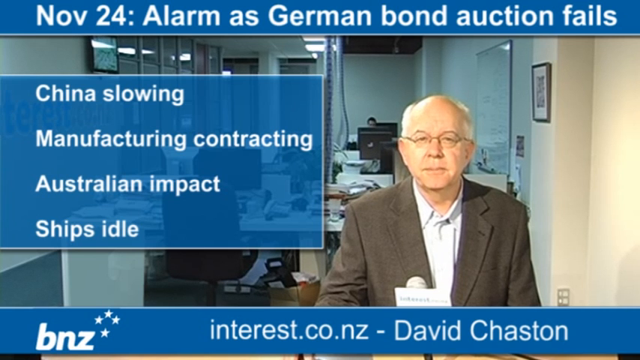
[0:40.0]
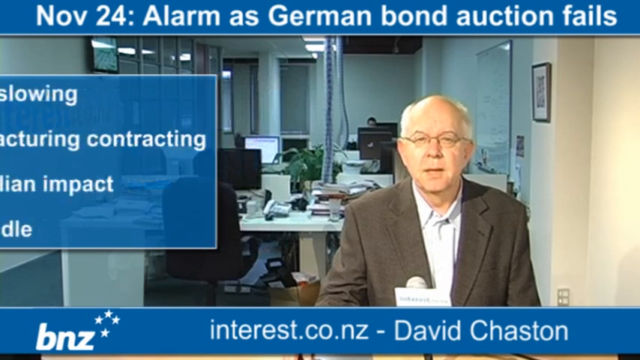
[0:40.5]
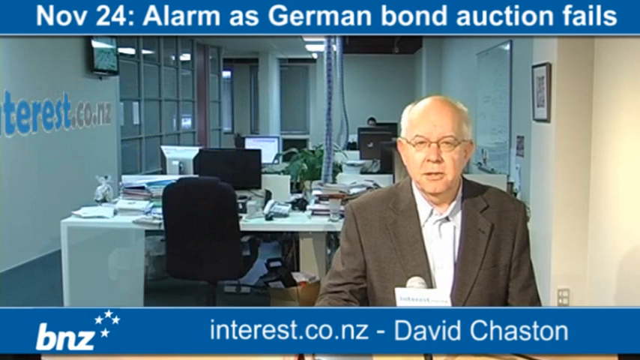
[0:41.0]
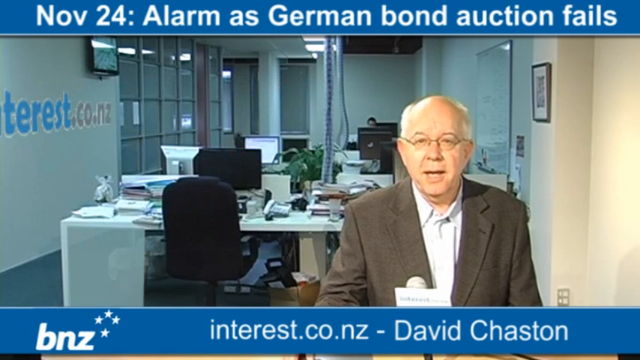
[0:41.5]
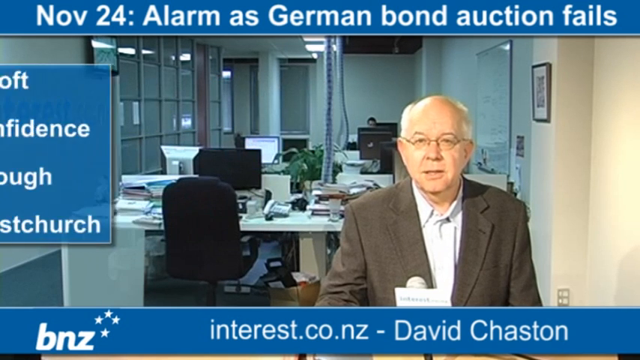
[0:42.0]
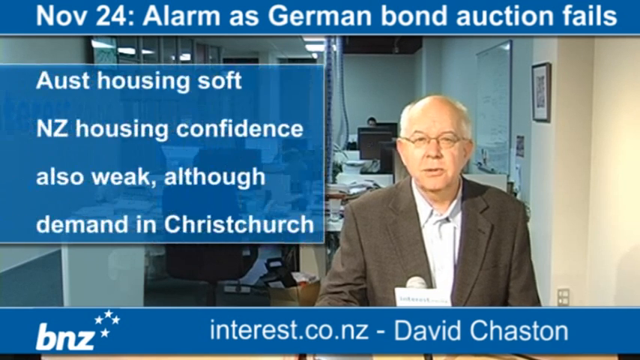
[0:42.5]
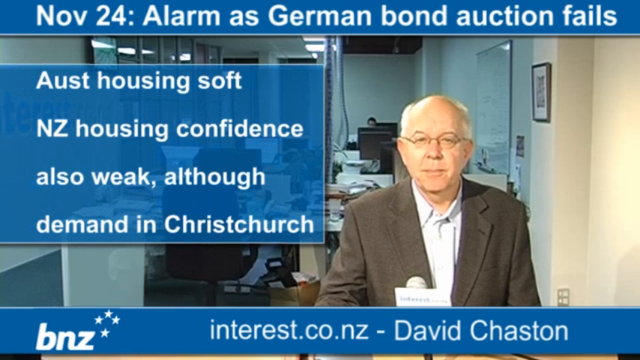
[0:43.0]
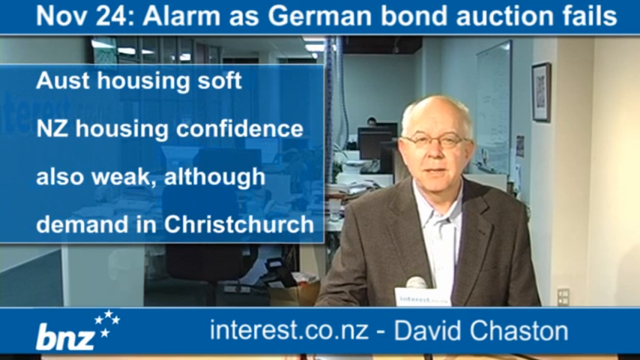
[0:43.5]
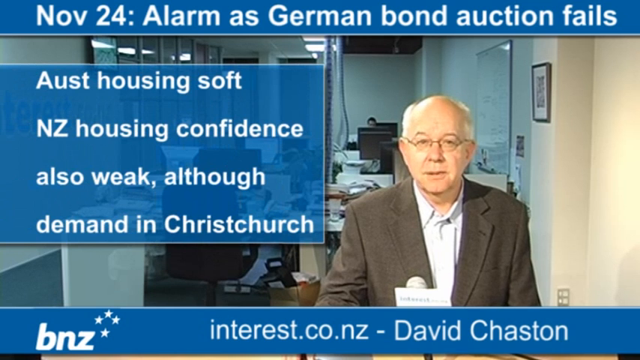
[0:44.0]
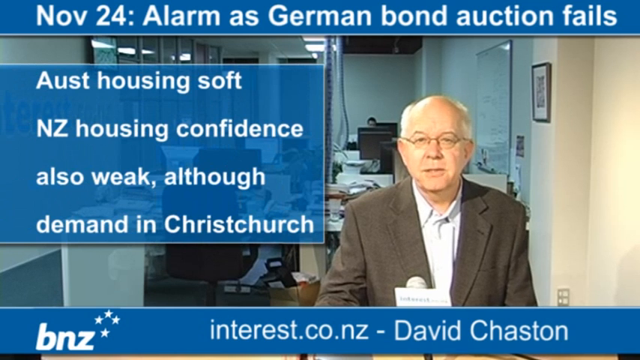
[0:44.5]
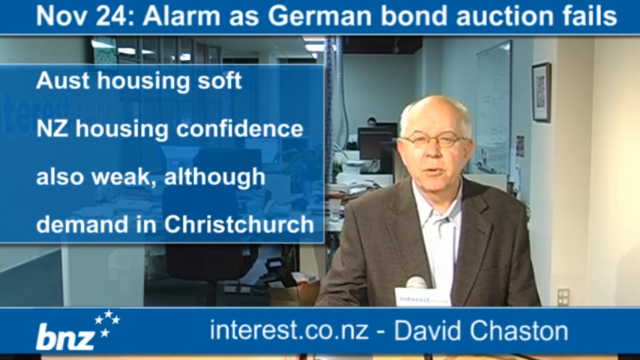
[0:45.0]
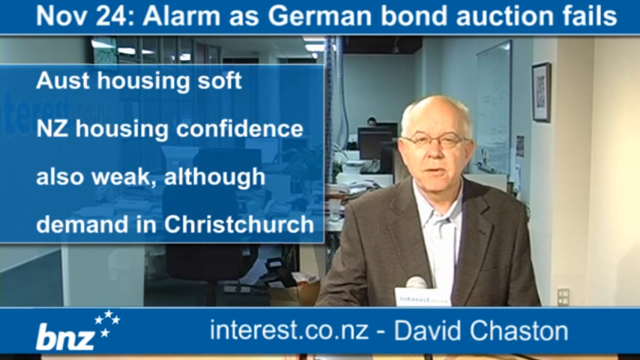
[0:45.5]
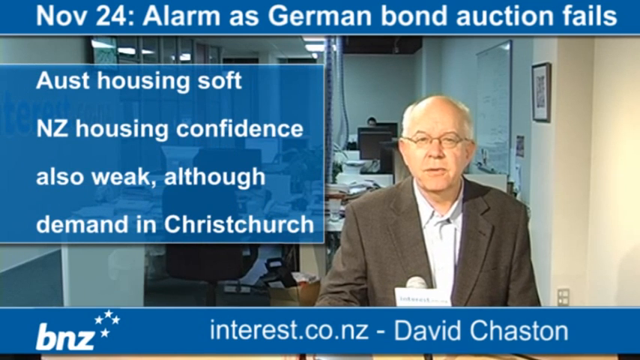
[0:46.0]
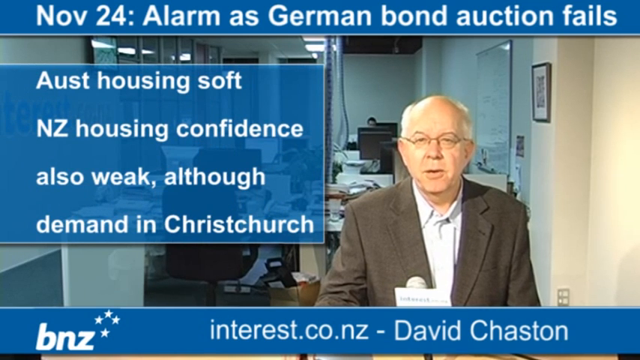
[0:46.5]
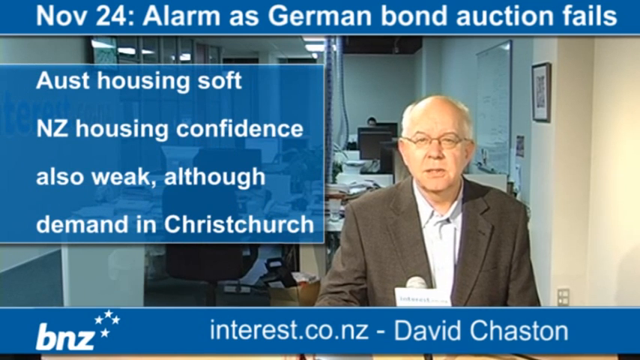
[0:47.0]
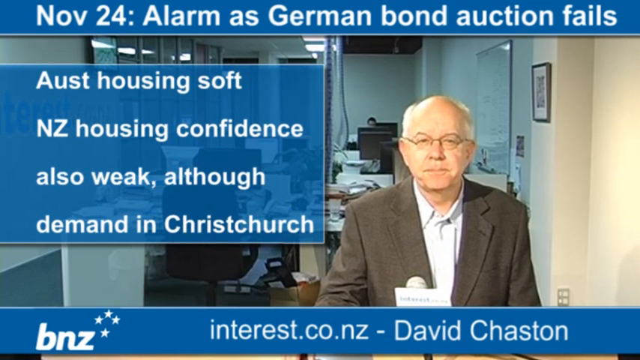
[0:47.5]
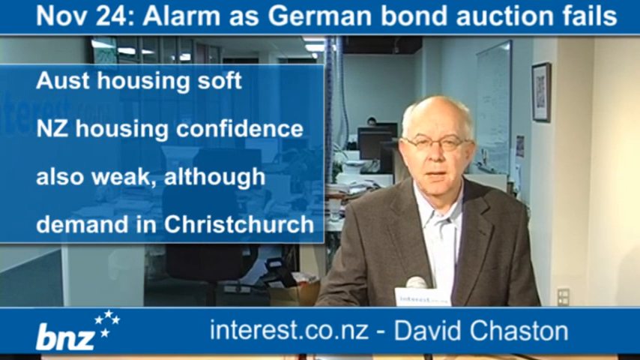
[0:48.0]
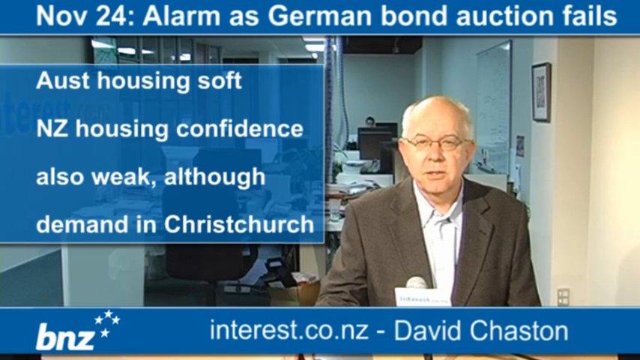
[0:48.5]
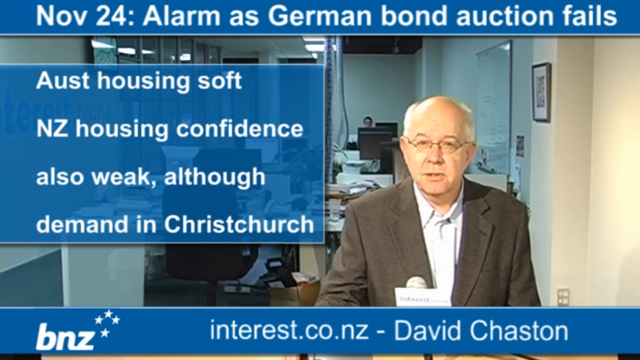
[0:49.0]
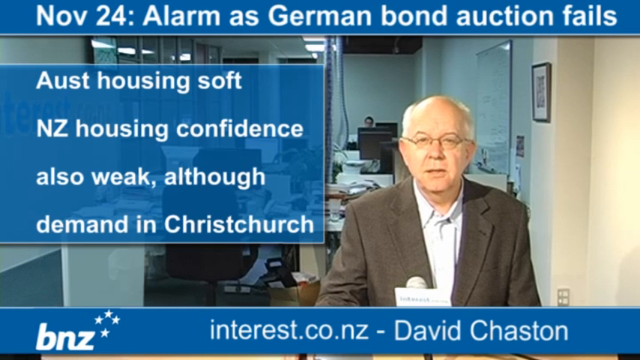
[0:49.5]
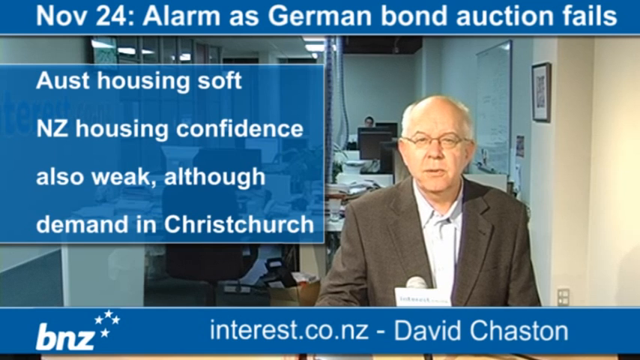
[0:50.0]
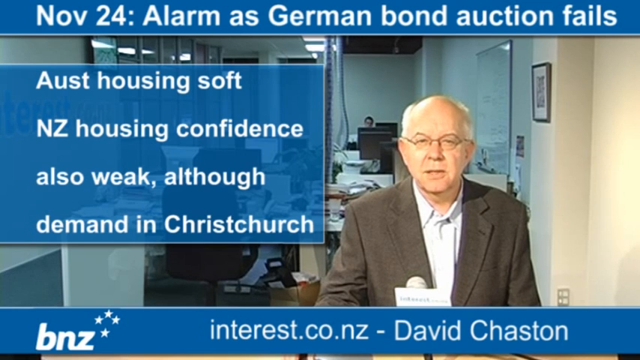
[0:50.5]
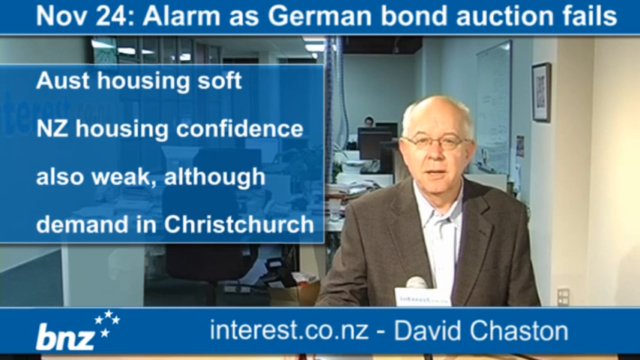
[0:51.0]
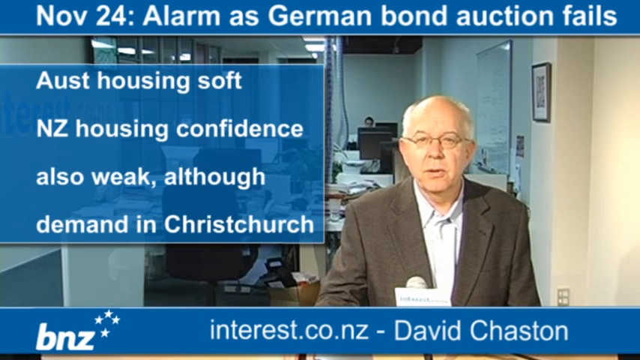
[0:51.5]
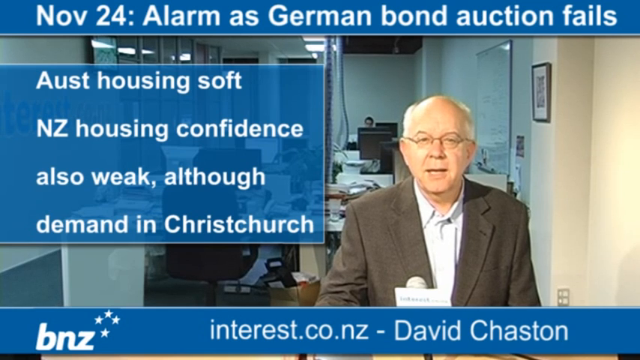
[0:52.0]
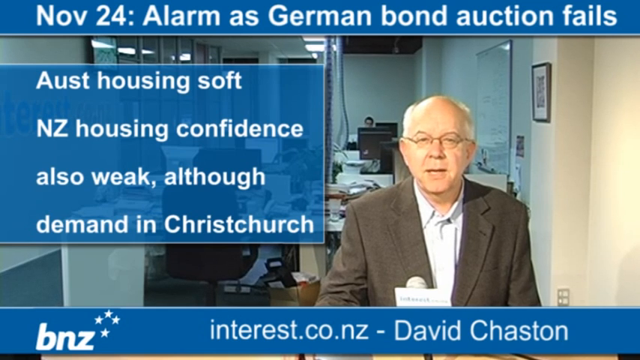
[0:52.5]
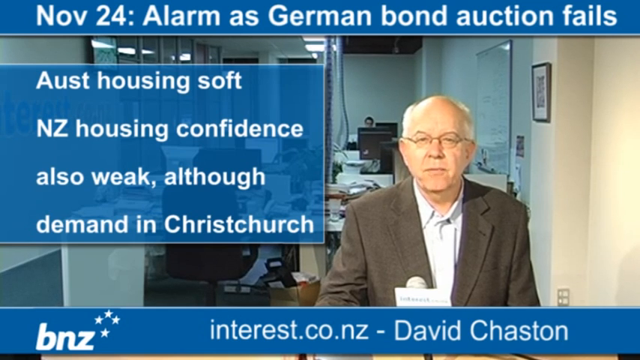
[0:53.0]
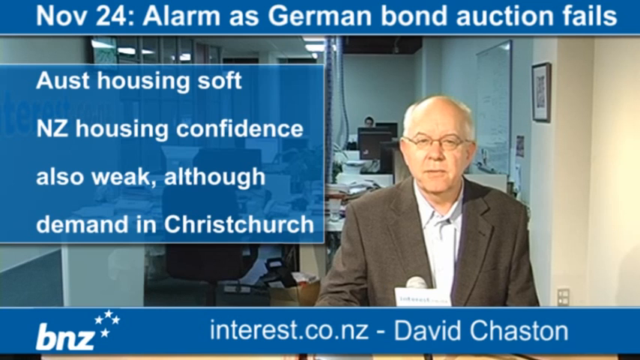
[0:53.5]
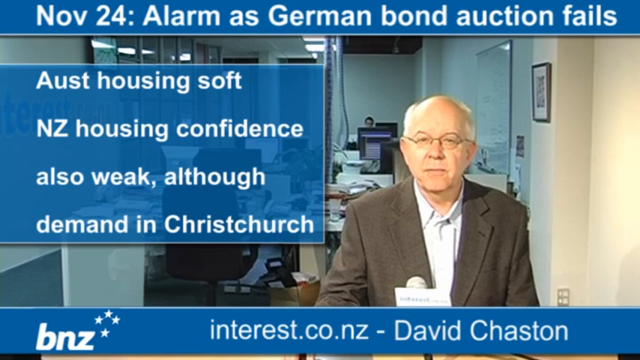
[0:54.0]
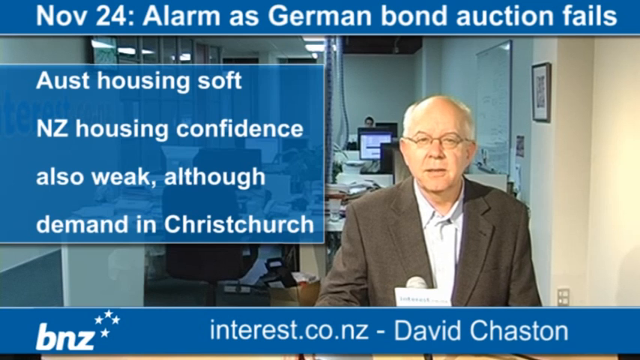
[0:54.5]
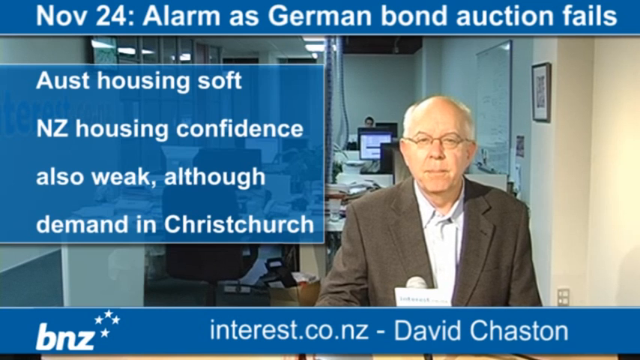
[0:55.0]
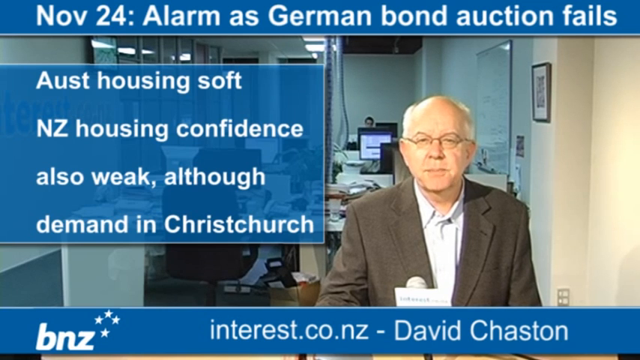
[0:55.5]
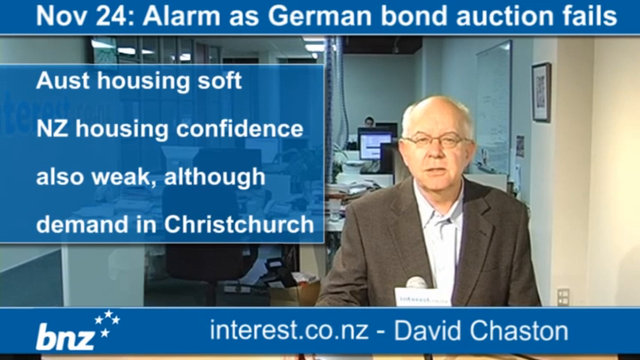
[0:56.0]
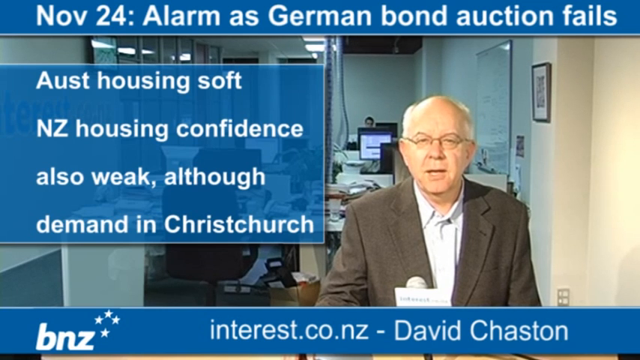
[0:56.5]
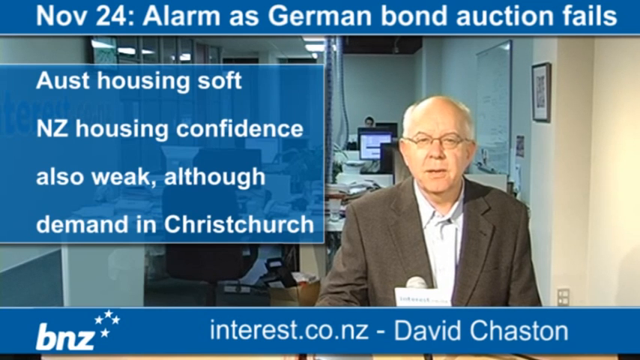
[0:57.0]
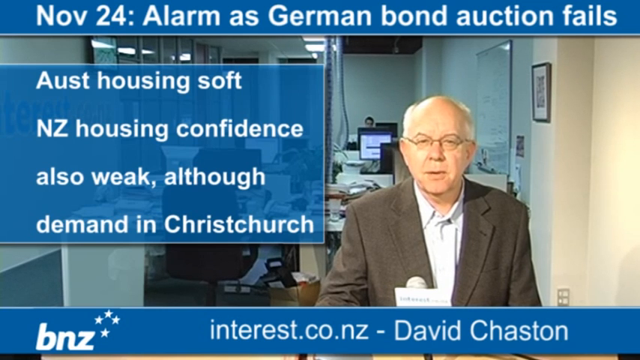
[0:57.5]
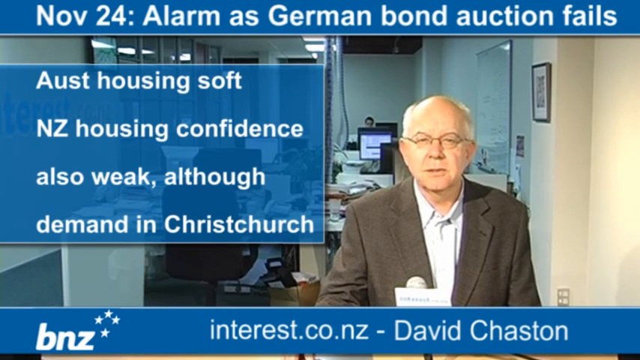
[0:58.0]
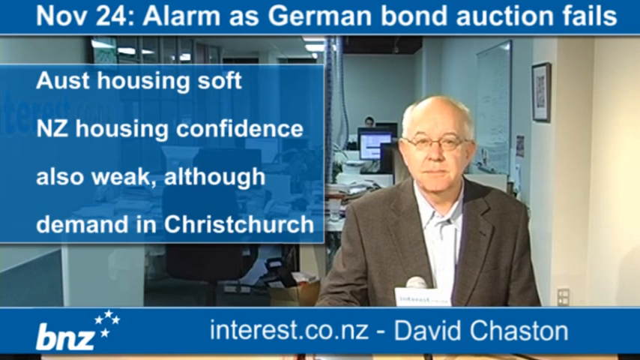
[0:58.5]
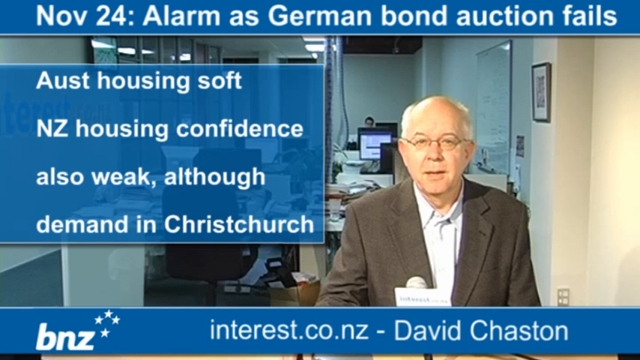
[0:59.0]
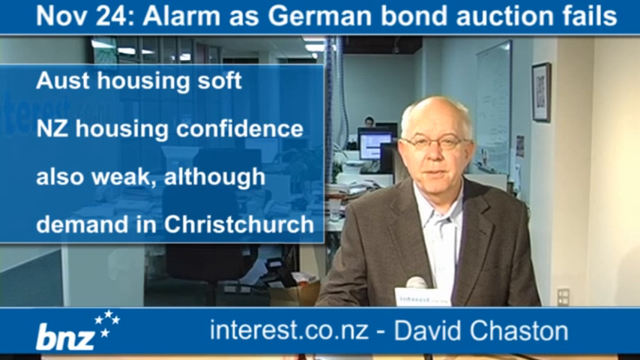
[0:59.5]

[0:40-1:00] The older white man with glasses, dressed business casual, keeps talking into the microphone. The text "China slowing, manufacturing contracting, Australian impact, ships idle" appears, then goes away and is replaced by text reading "New Zealand housing confidence also weak." People are visible in the background. Nothing else is on the screen; the quality is not great and the video looks very independently made.